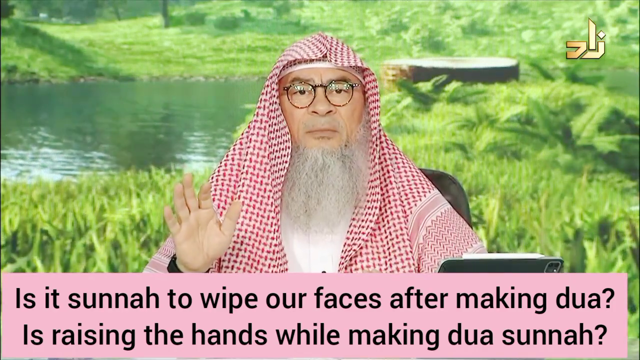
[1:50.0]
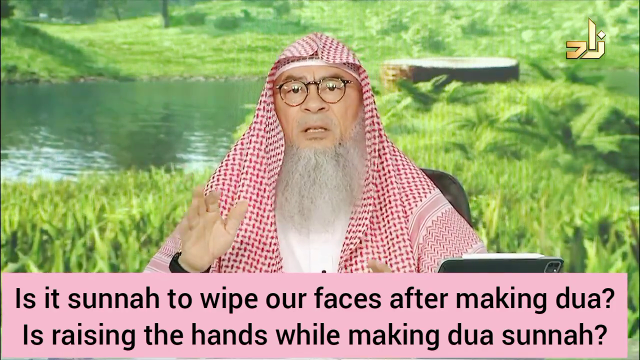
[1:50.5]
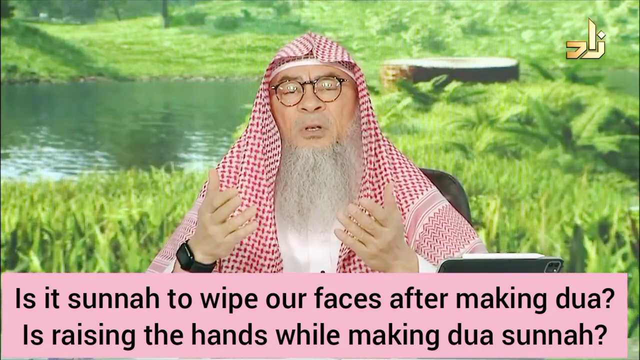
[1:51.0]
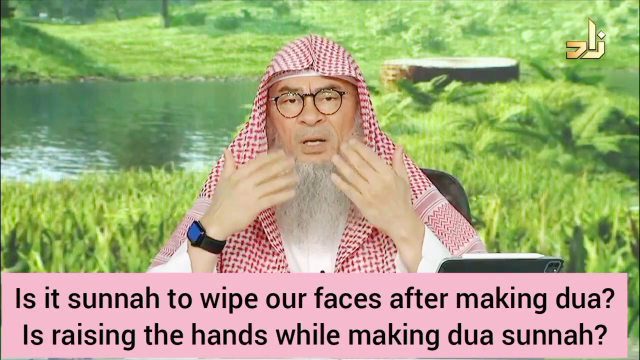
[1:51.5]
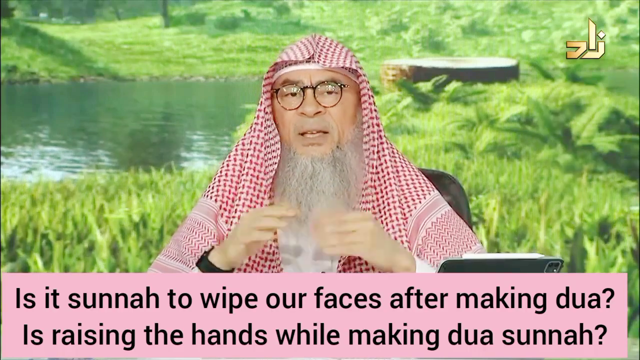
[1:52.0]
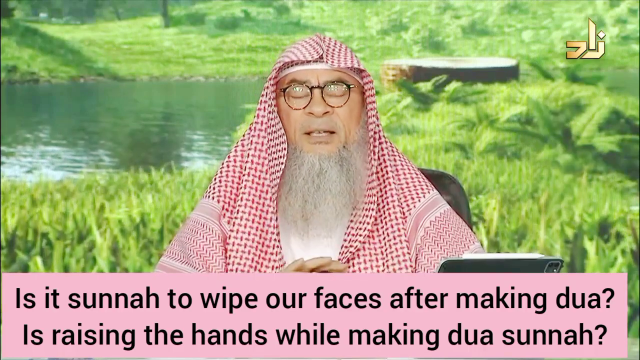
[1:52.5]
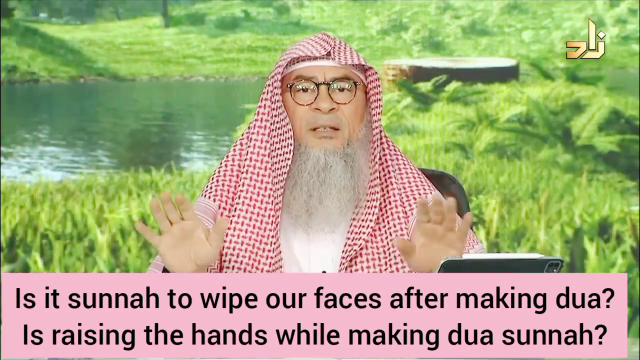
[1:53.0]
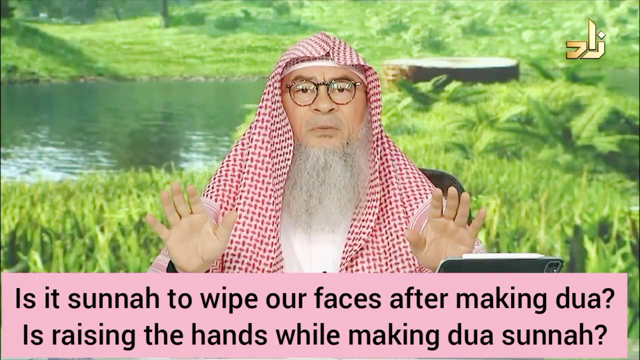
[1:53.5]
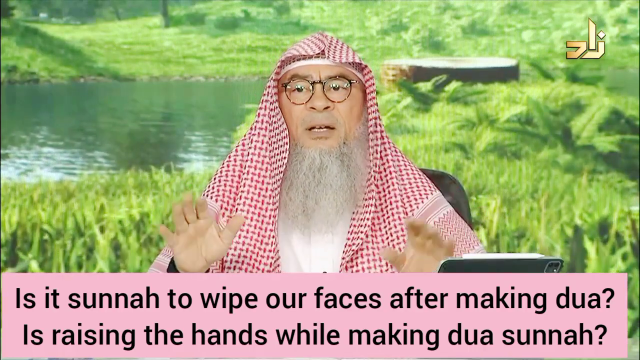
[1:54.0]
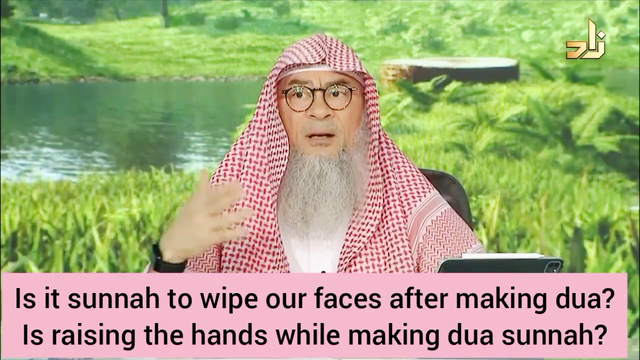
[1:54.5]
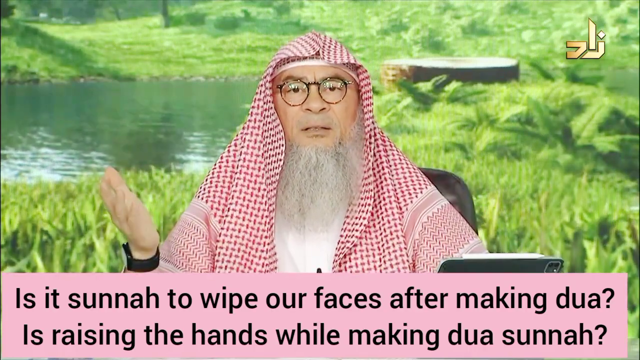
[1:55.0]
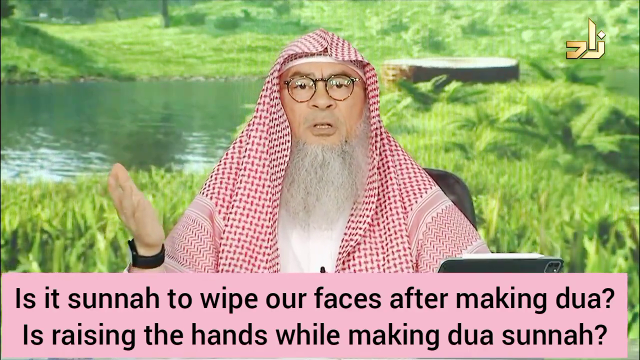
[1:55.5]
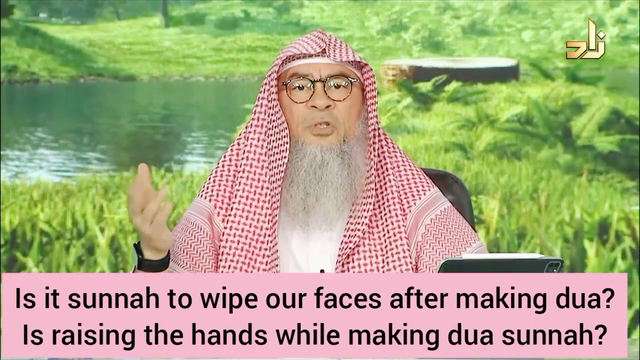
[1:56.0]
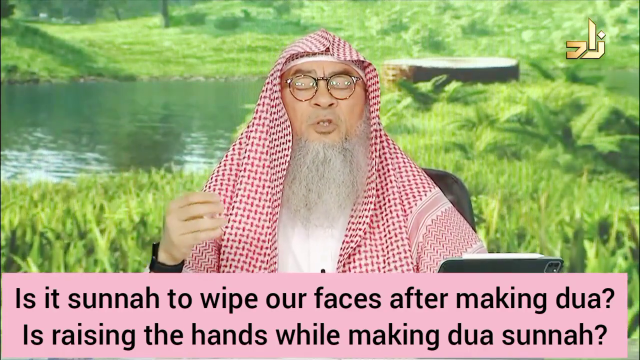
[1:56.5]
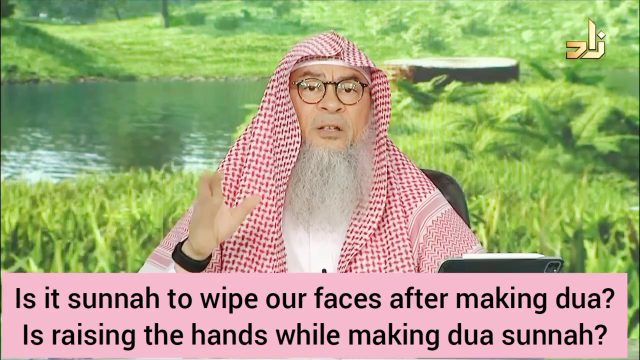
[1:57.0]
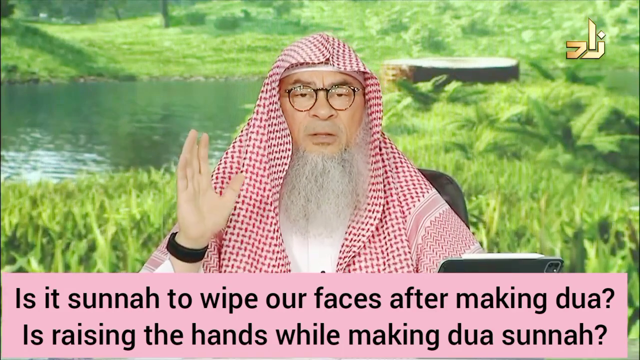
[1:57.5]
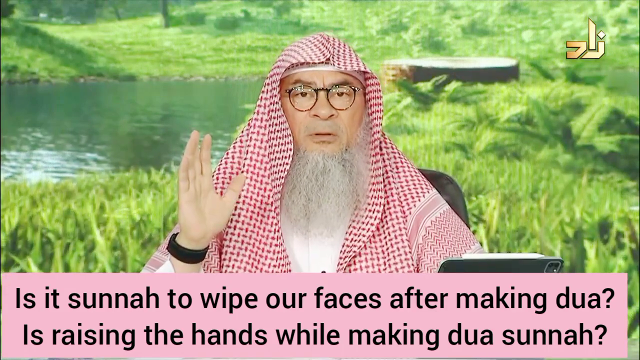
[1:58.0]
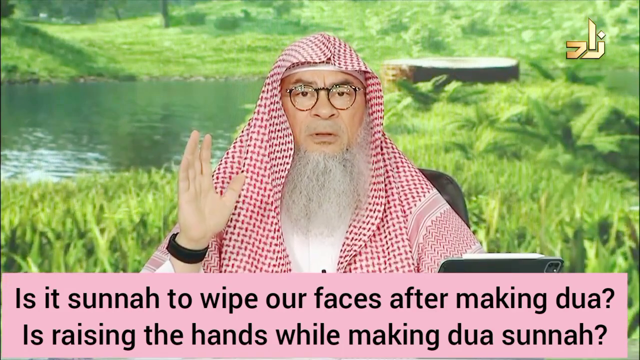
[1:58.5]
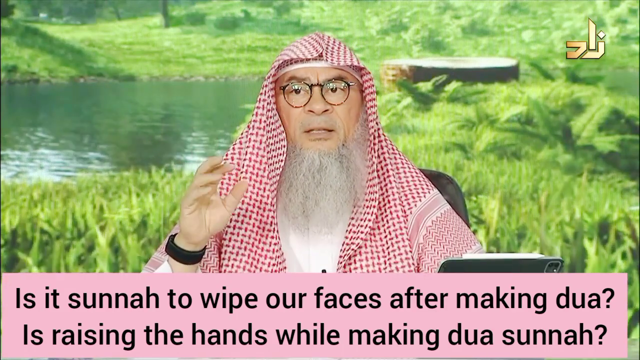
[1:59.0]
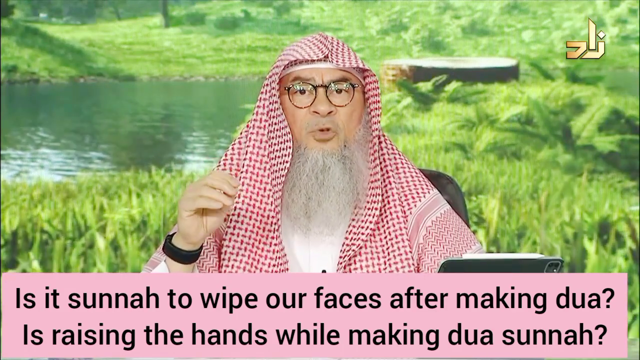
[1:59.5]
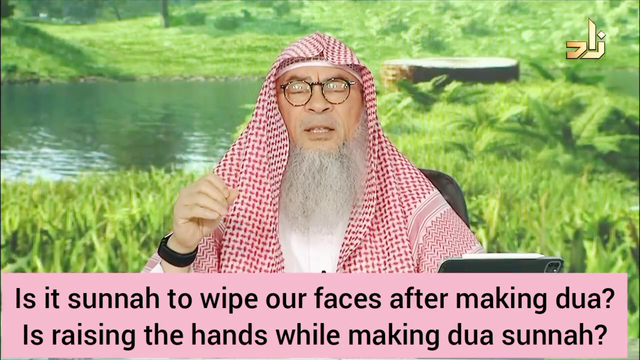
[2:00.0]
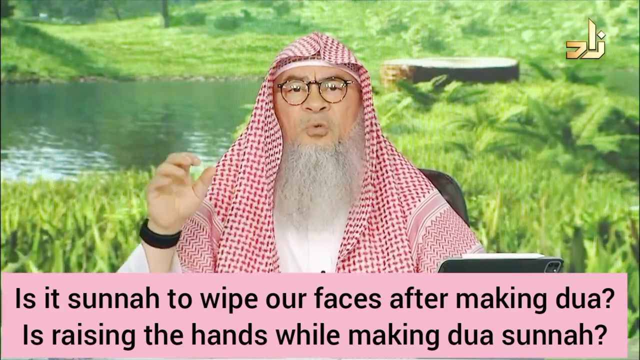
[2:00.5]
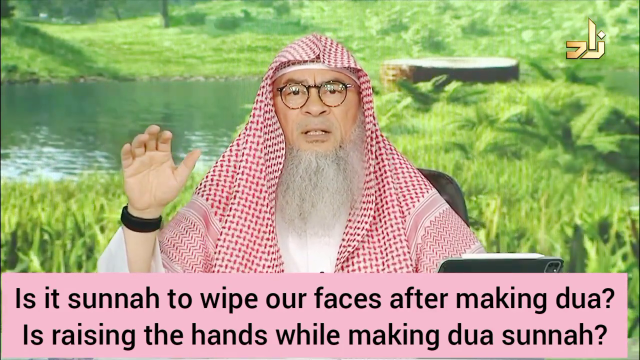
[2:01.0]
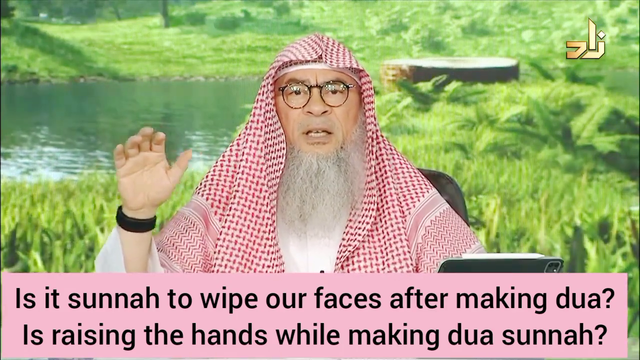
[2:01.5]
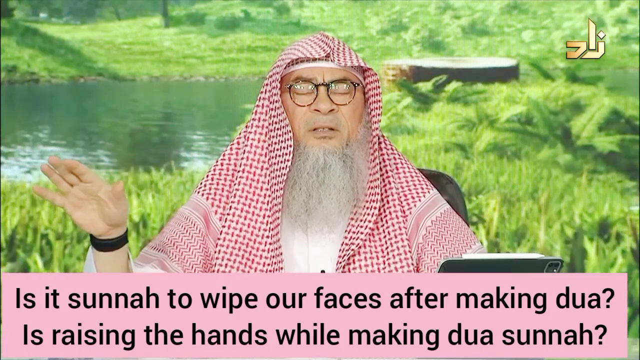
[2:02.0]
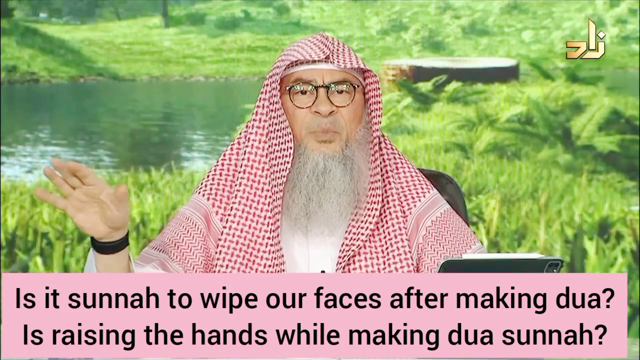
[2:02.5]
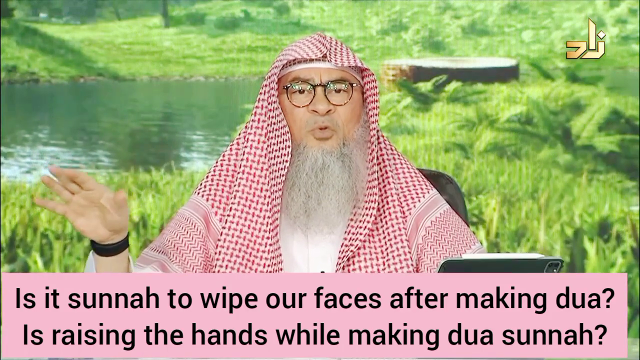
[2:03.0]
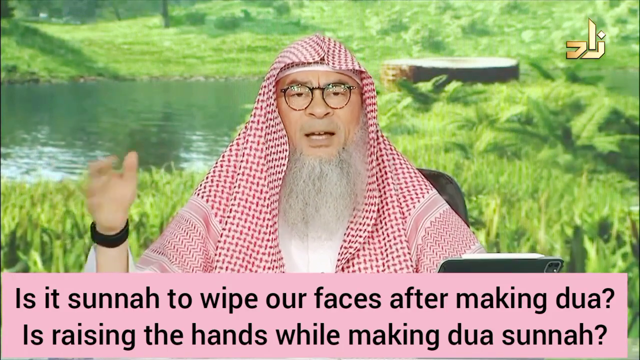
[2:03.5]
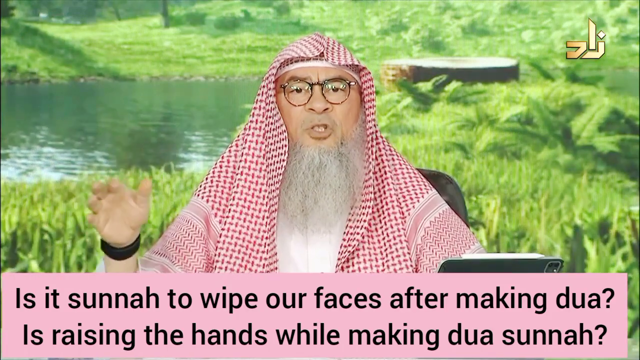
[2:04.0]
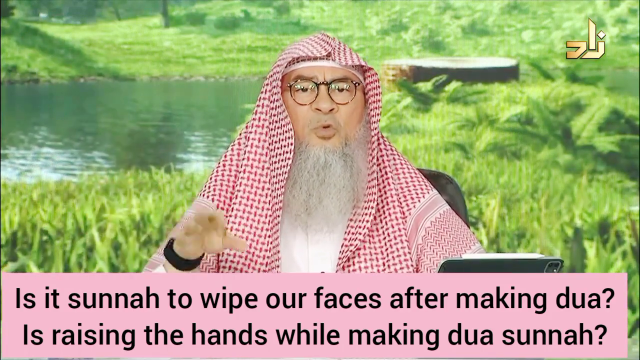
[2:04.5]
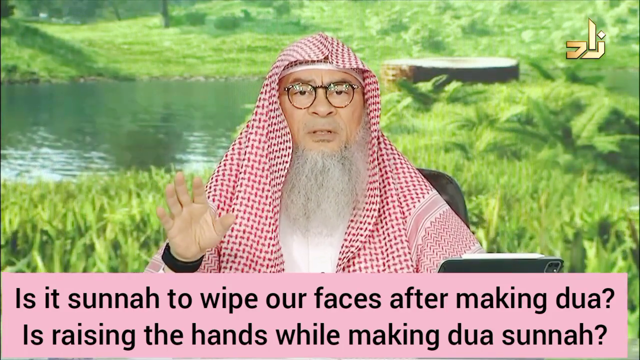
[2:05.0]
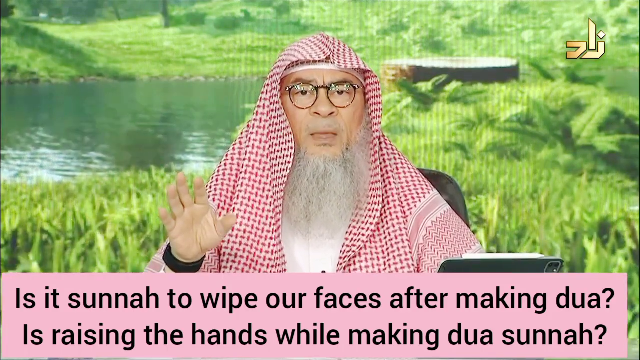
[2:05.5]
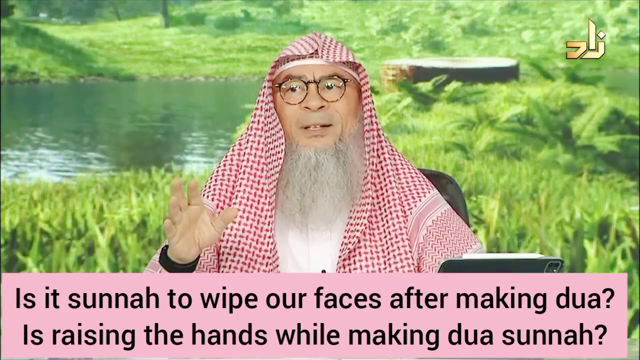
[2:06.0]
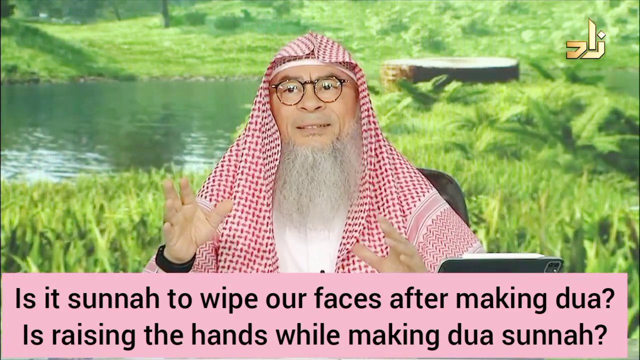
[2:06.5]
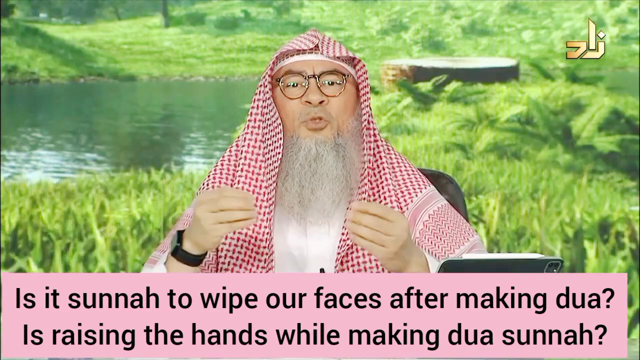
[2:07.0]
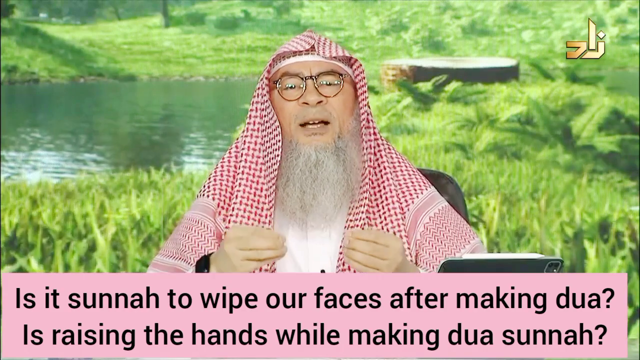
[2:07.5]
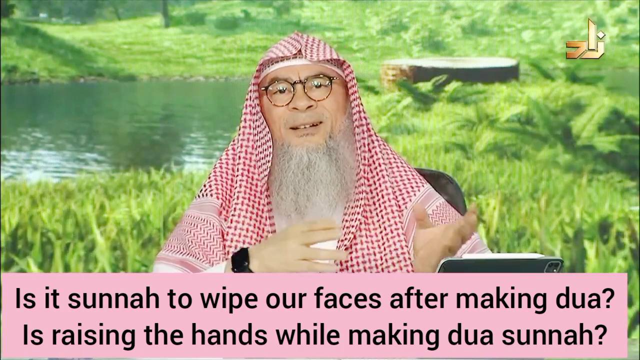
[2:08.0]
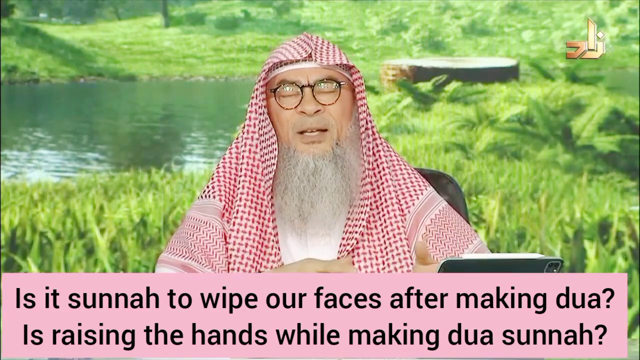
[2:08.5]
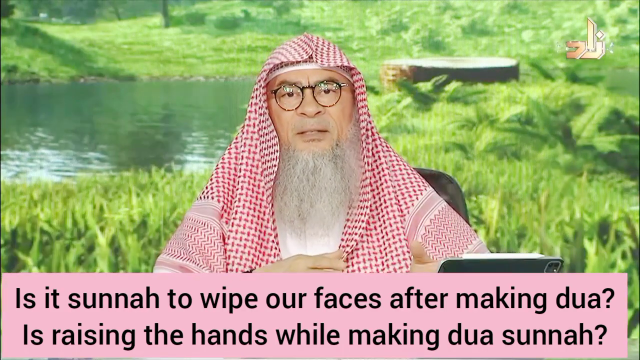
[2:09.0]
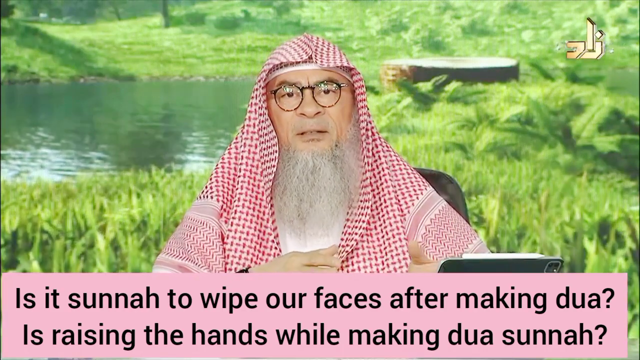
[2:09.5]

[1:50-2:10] The host talks with his hands, repeatedly moving his left hand. He wears a black watch on his wrist that looks like an Apple Watch or smartwatch. His red and white headdress has an almost checkered pattern. Under the headdress he wears a plain white long-sleeve shirt. He also wears glasses with very big circular lenses; the frames are black and seem to be black and brown in an almost speckled pattern. He is still addressing the same two questions.